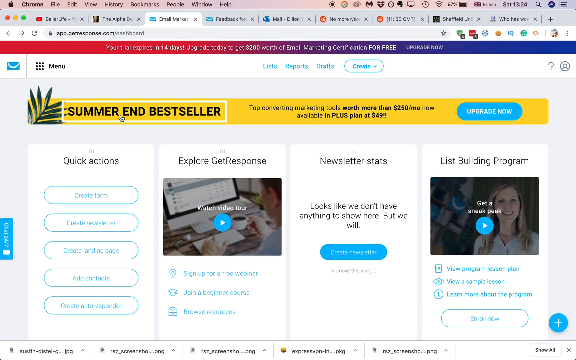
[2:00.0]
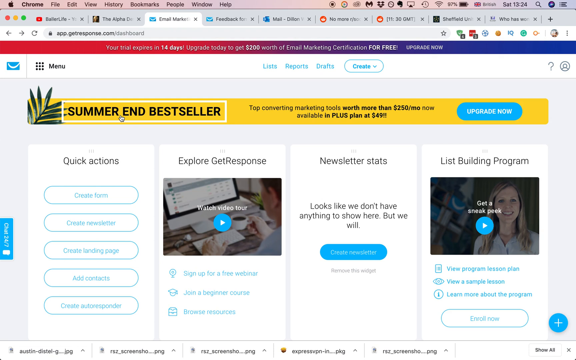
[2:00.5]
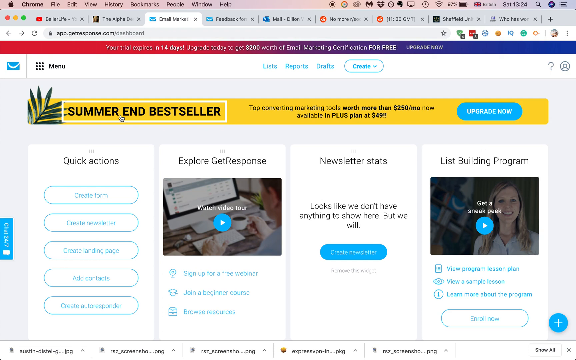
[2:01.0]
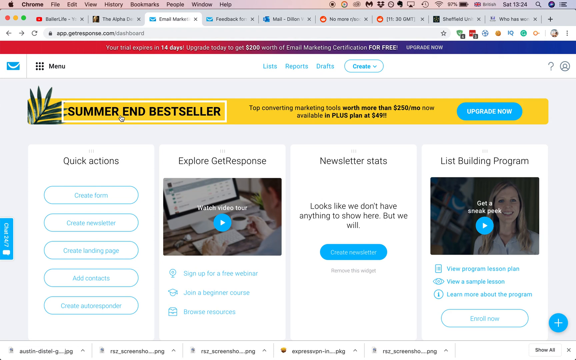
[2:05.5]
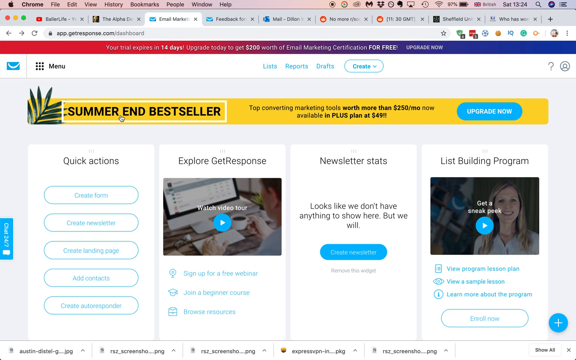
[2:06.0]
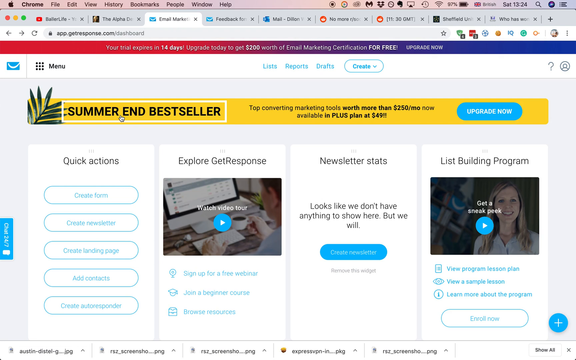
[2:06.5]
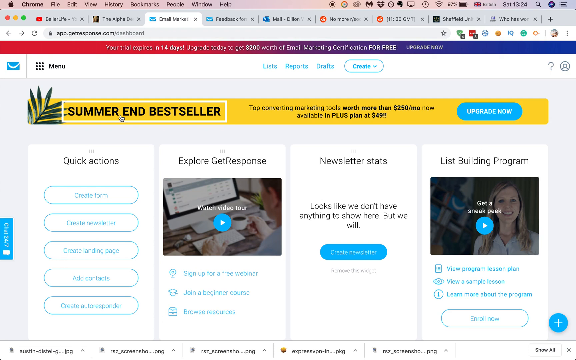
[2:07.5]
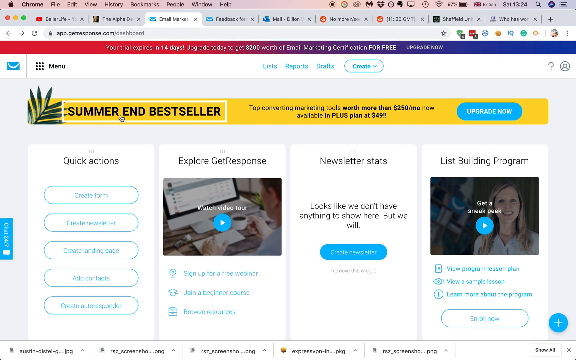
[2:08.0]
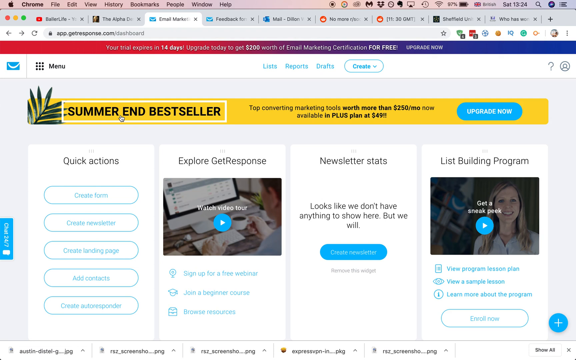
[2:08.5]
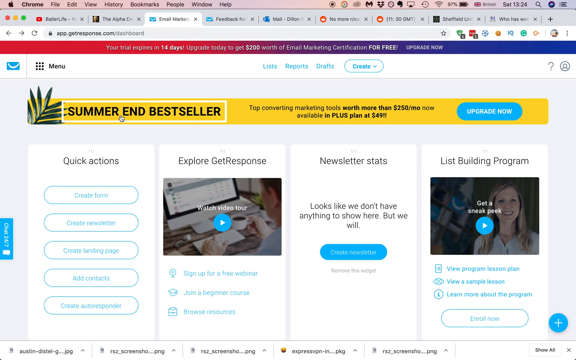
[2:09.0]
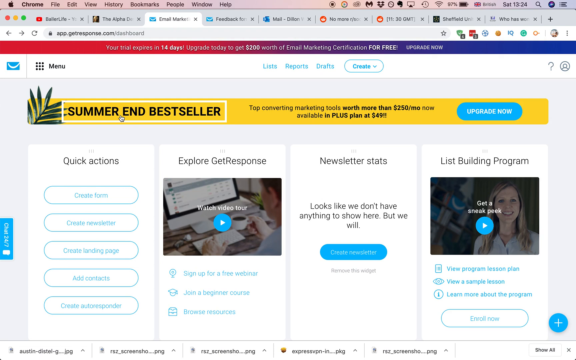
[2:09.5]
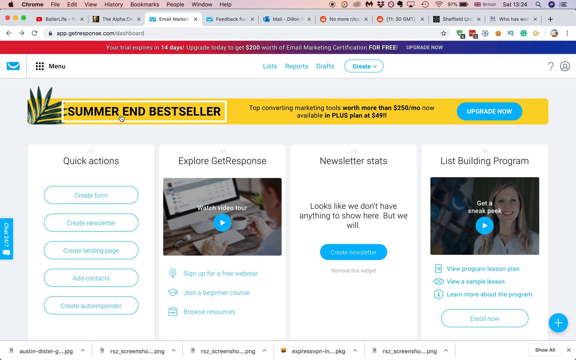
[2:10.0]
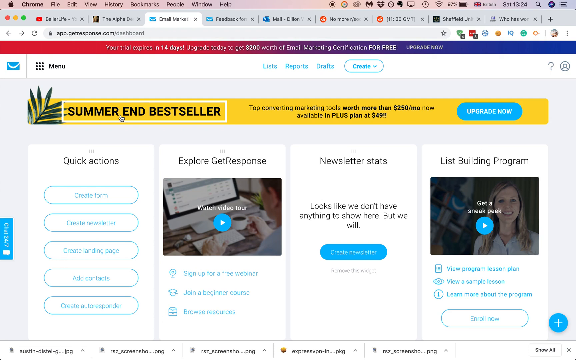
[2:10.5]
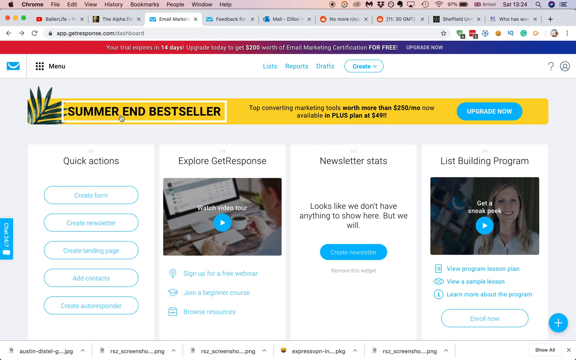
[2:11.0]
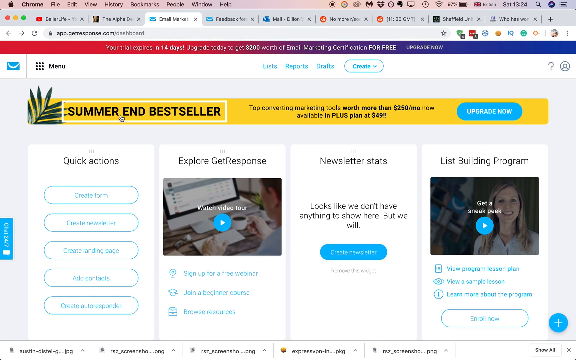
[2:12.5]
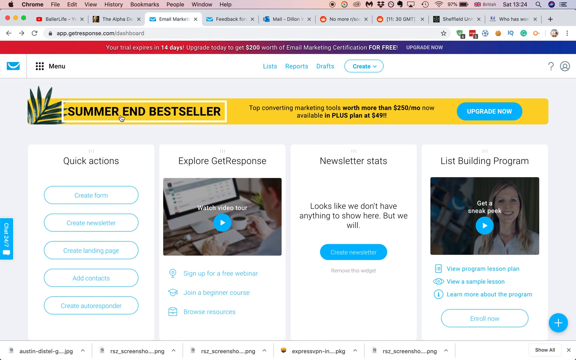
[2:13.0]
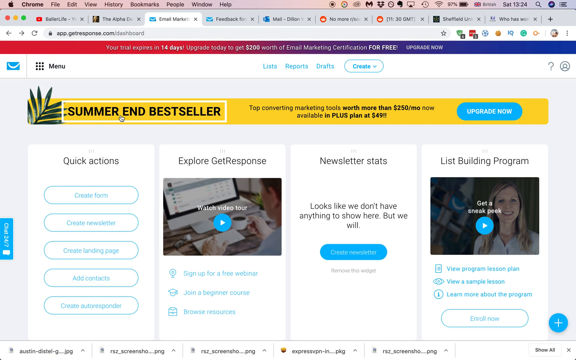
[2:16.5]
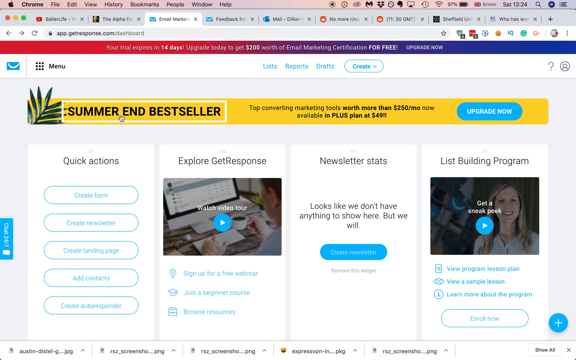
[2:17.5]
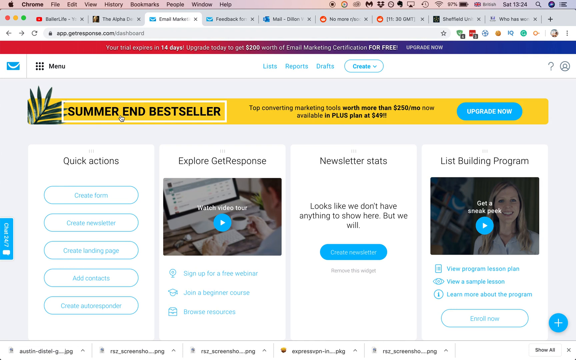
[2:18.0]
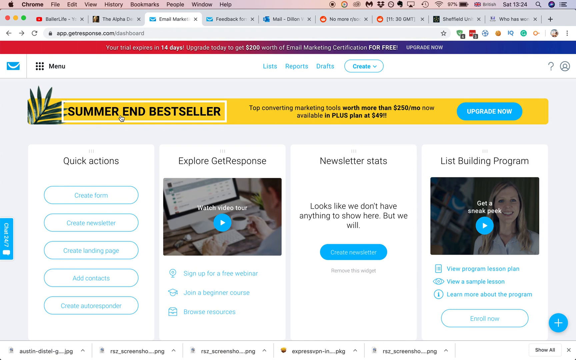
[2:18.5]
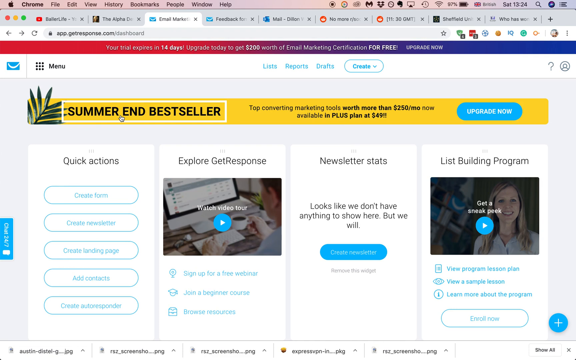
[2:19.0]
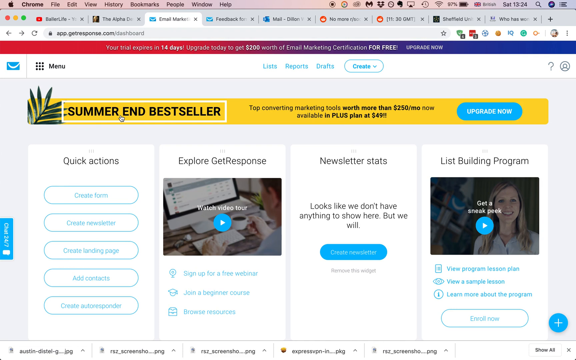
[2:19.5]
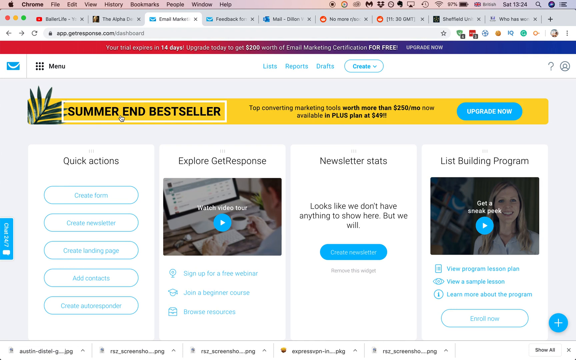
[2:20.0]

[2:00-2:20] The user's cursor still rests on the words "SUMMER END BESTSELLER" in the yellow header, which still says "Top Converting Marketing Tools worth more than $250/mo now available in PLUS plan at $49!!". The words still have a thin white rectangular border around them, and the letters are bold and large. There is still no movement: the screen stays motionless, the cursor stays still, and the four panels and their options stand still. Many tabs are still open on the screen, but the user does not click any of the tabs or any of the options on the website.